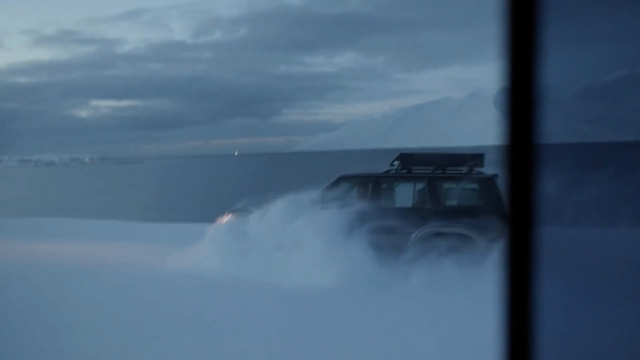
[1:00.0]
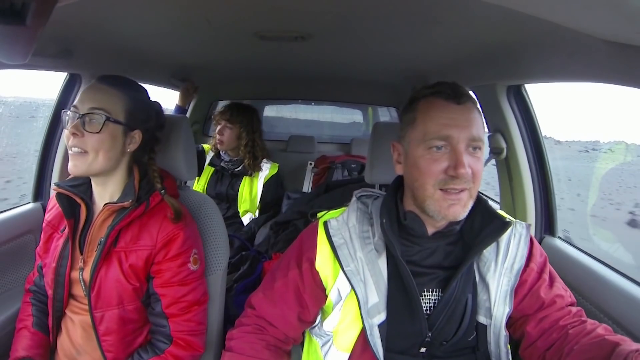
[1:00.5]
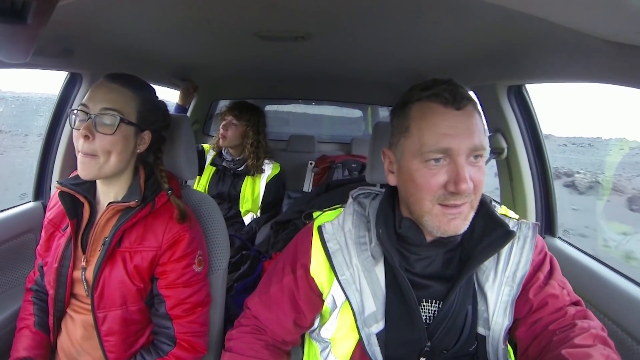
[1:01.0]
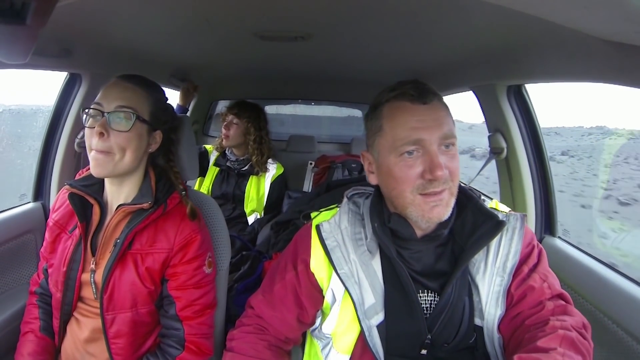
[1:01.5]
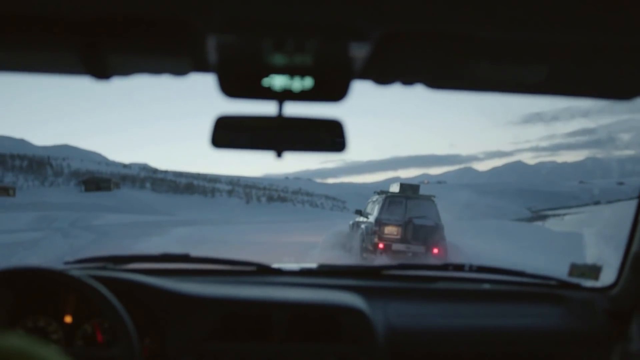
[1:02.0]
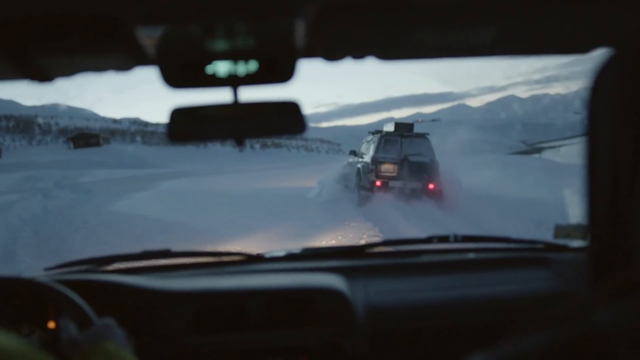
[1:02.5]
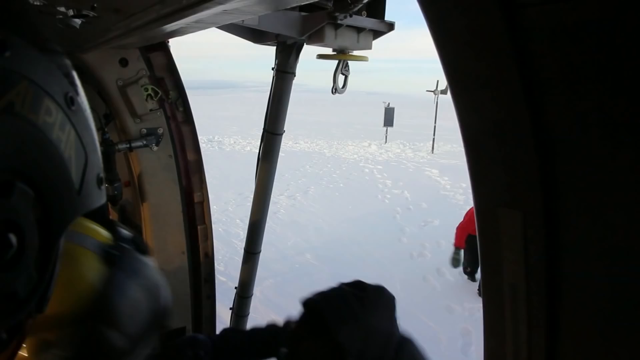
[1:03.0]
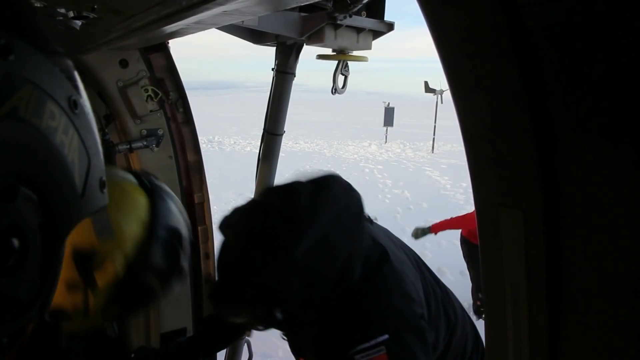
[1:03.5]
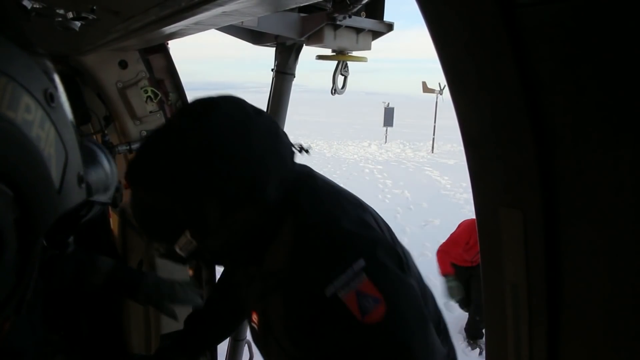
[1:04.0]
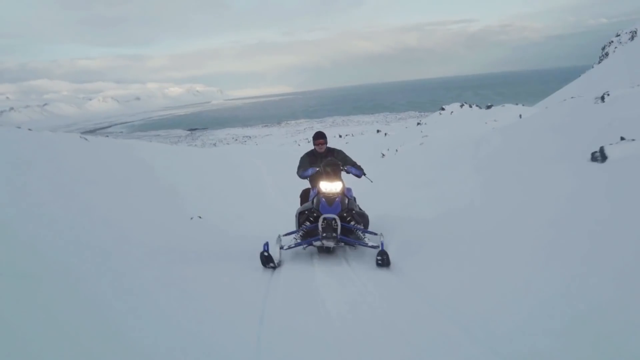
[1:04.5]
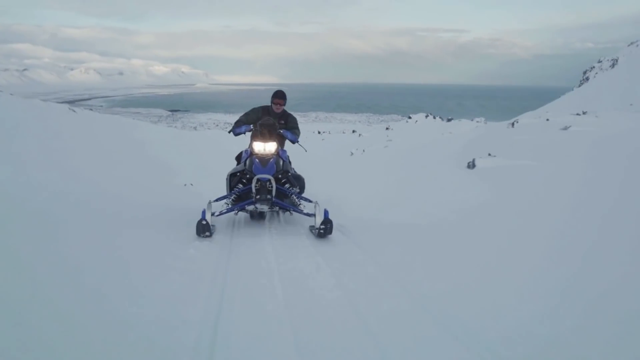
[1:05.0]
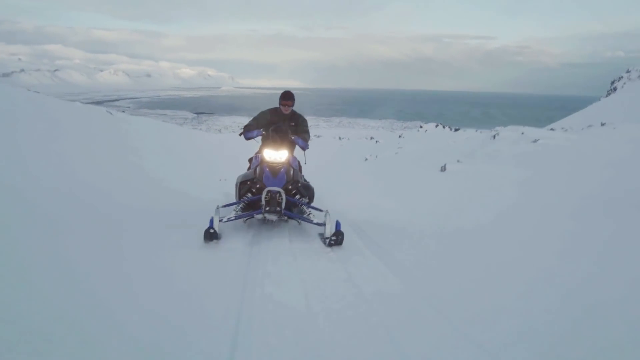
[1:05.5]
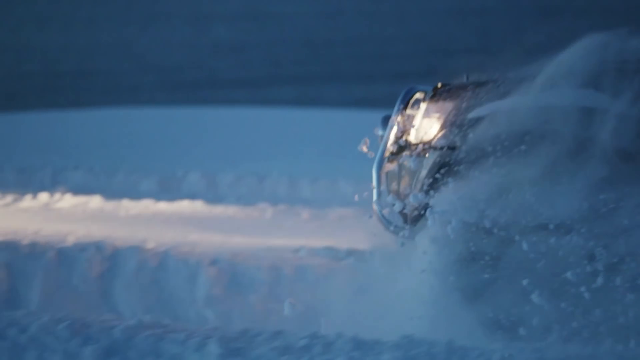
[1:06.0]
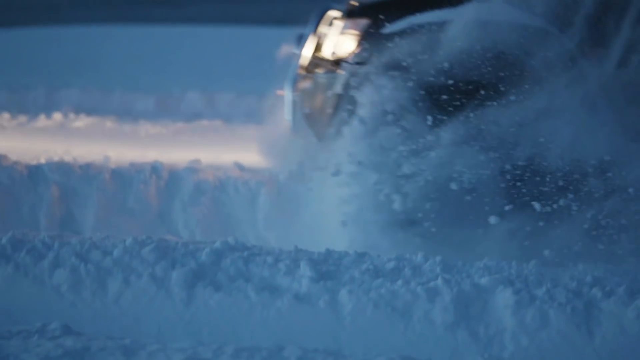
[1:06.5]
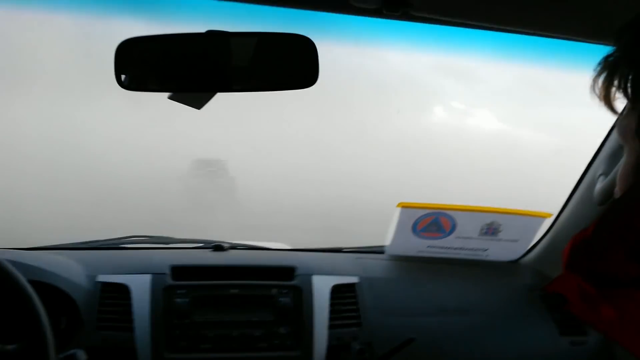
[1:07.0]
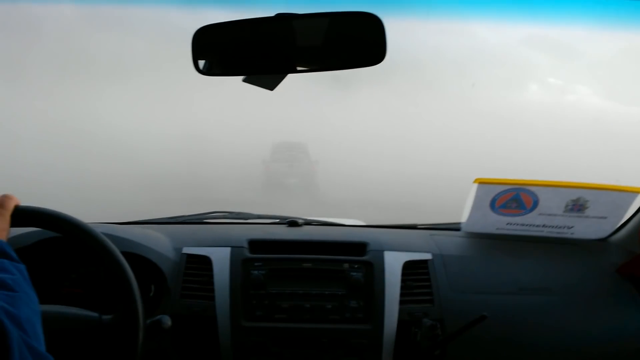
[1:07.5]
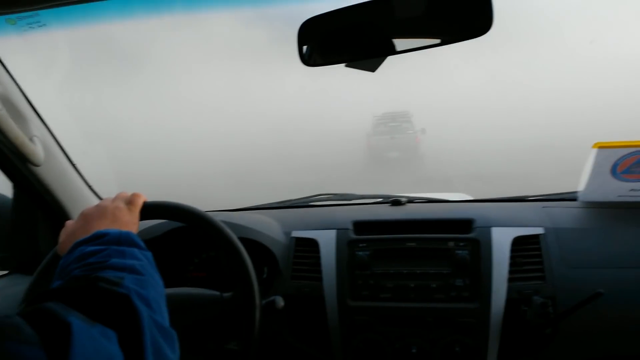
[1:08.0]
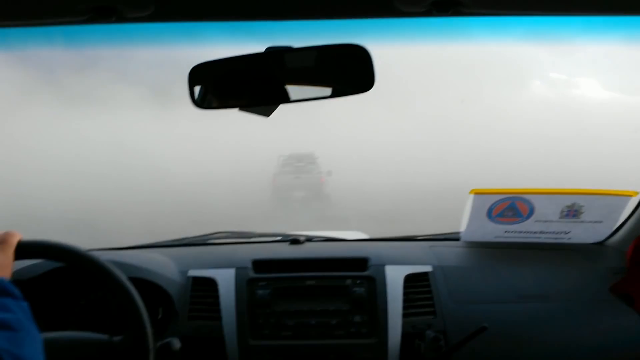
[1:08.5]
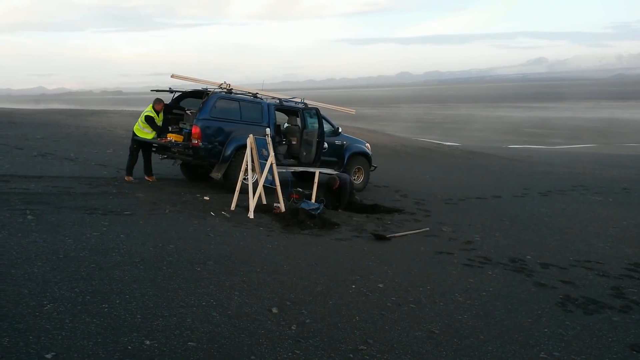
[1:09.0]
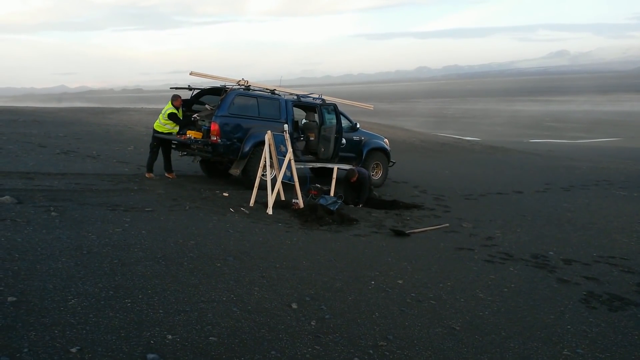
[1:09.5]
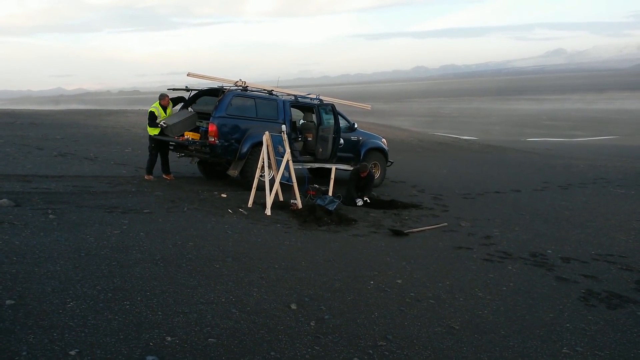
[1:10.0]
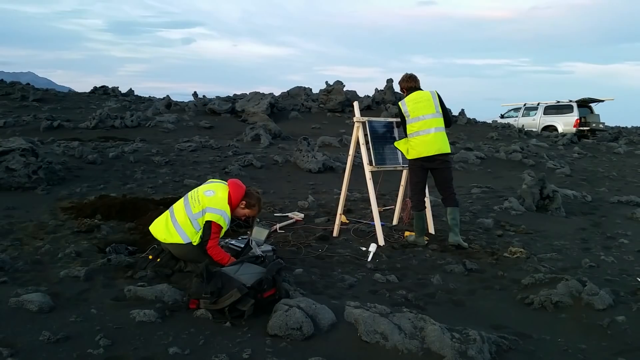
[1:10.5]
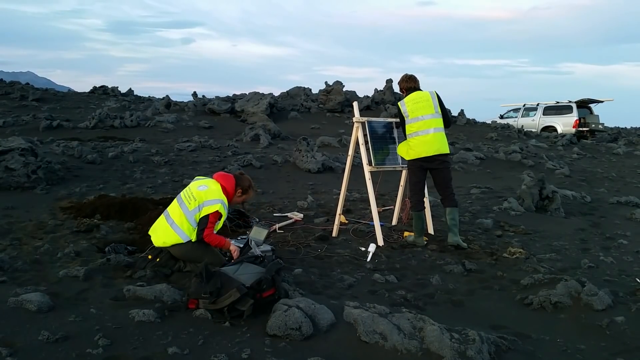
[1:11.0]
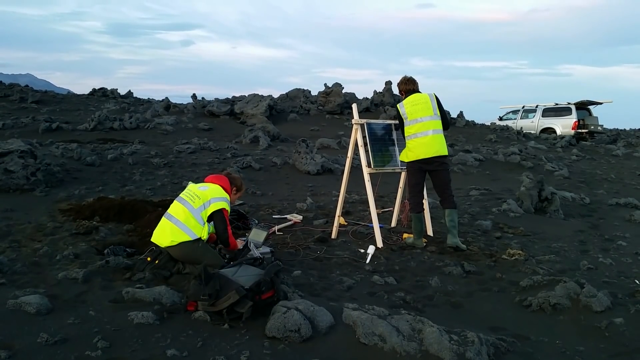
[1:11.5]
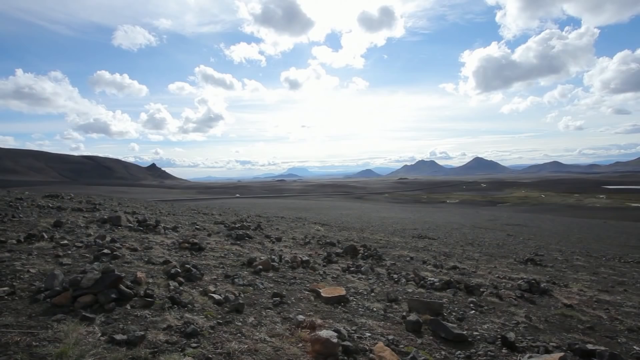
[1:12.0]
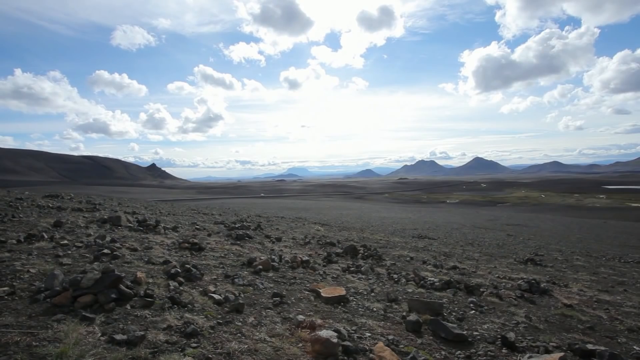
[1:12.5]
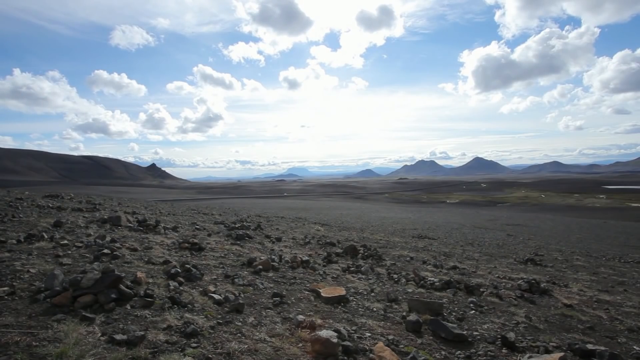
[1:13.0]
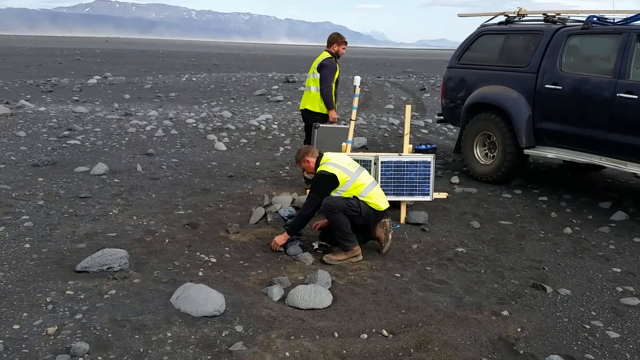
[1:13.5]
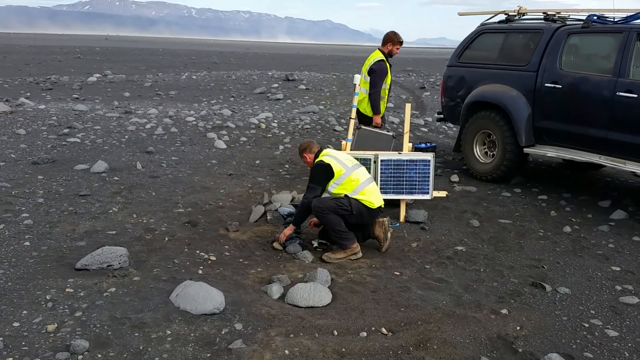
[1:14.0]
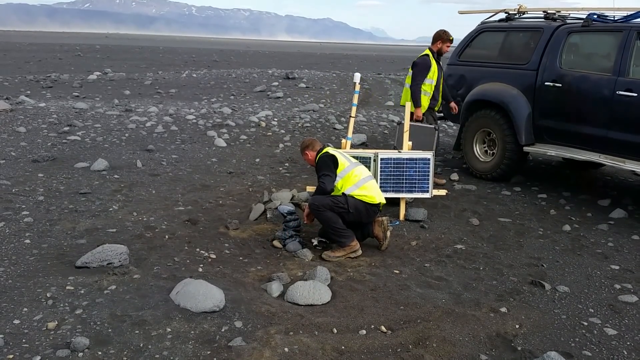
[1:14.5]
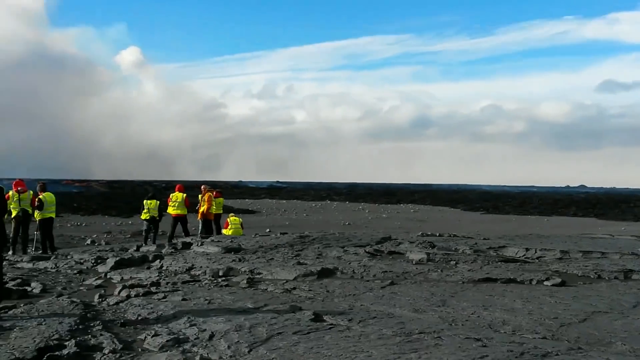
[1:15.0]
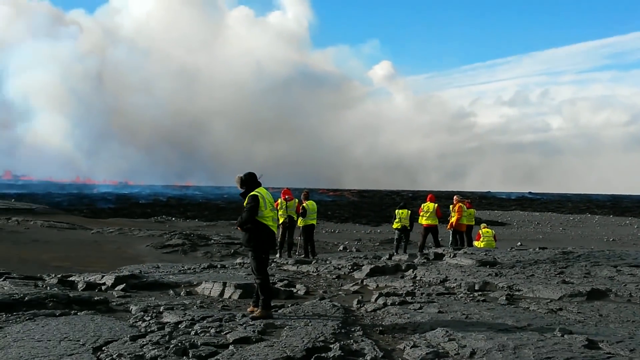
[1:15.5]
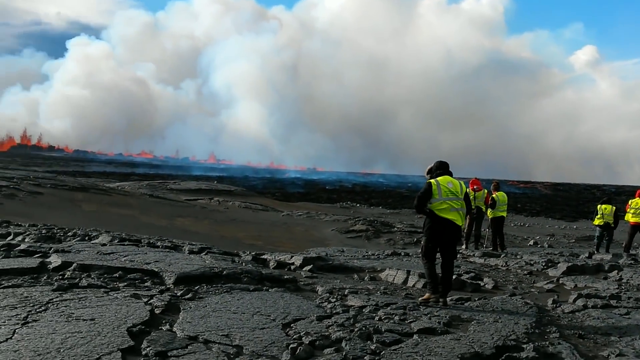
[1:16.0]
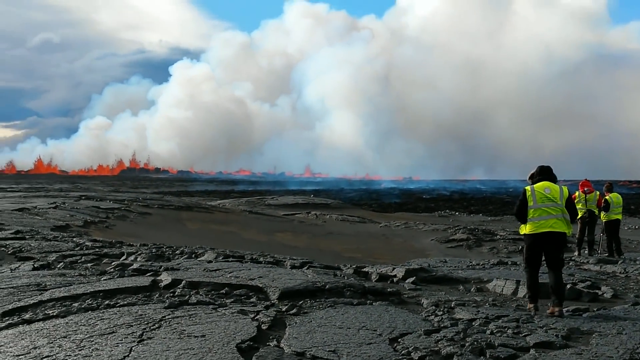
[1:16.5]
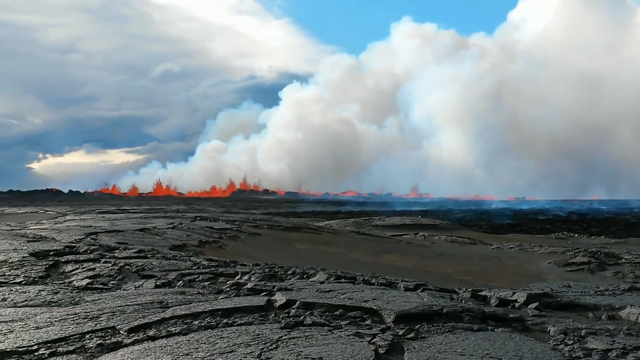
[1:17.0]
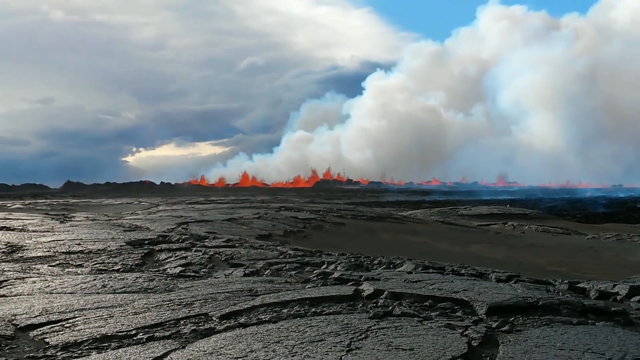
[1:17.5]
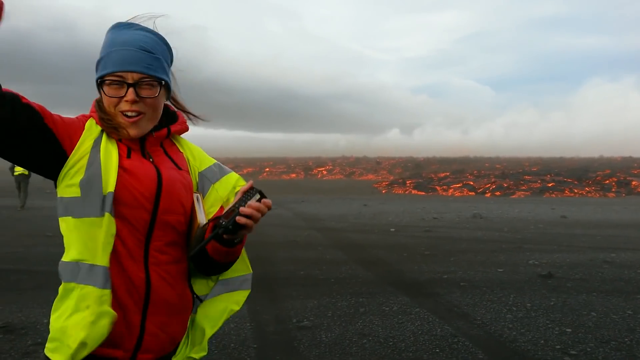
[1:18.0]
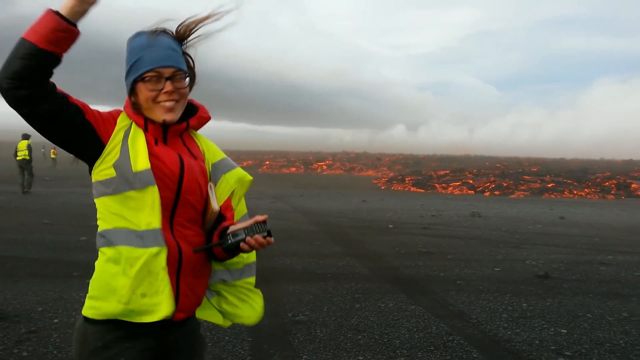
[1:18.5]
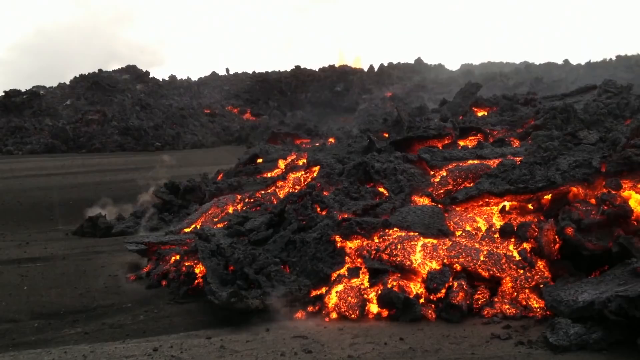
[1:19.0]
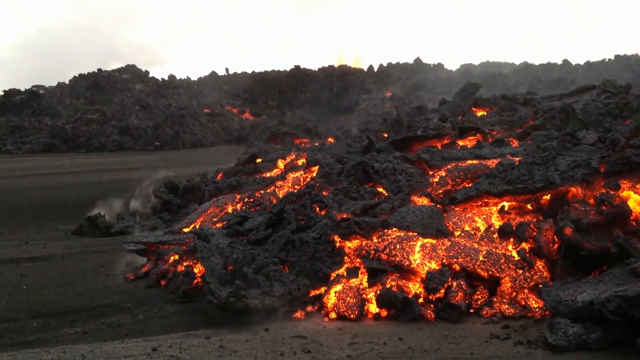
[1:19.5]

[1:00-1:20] The car appears to be a Jeep and is barely visible, spreading white debris around as it speeds down the road. Three people are inside the car: two women and a man, who is the driver, all looking out. A front view from inside shows another car ahead of them, and the whole area is covered in white. People get in through the door of a helicopter; only the door is visible, and the outside appears to be covered in snow. All are wearing winter clothing. A man on a ski-doo with its headlights on zooms towards the camera; he is wearing a face covering. The front of a Jeep plows through the snow. Back in the car, another car is ahead with snow being raised around it so that it is barely visible. A blue SUV is parked on a black mountaintop, and a man wearing a yellow vest is unloading it. Two men far away from another car, both in yellow vests, appear to be taking data; one is on his knees and the other is standing. A deserted landscape of just rocks and sand is shown. Two men in yellow vests are next to a car, one on the ground and the other walking towards a car, and there appear to be solar panels on the ground. The camera moves to a group of people, with the flames of the lava visible far away. A girl wearing a yellow vest happily jumps up and down. The shot ends with a close-up of the lava on the ground.